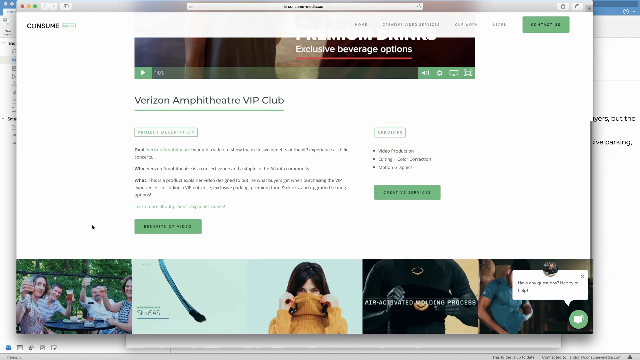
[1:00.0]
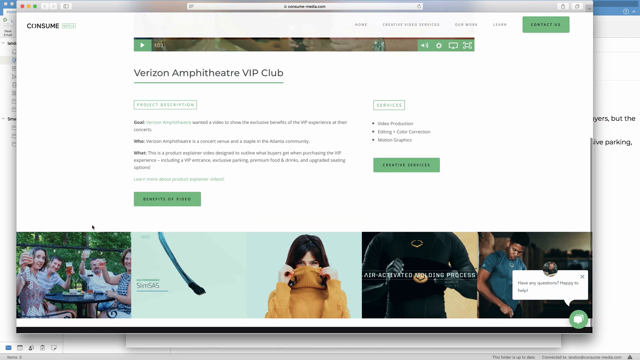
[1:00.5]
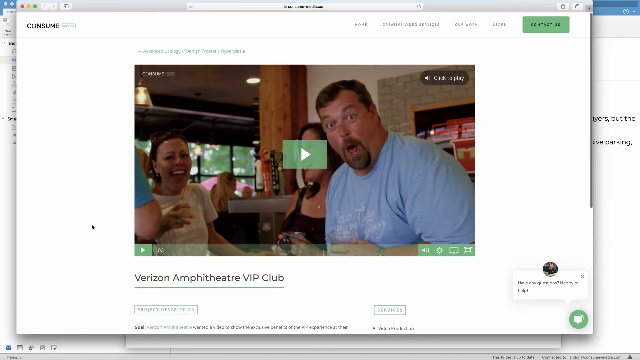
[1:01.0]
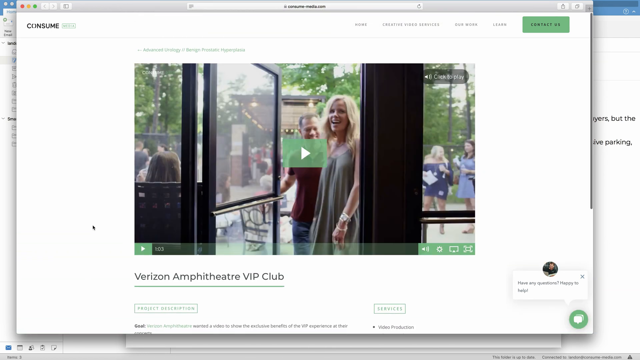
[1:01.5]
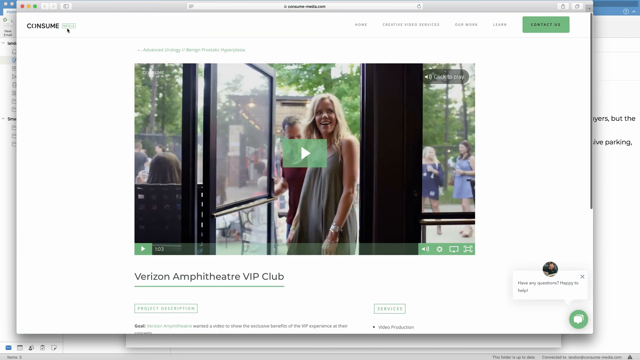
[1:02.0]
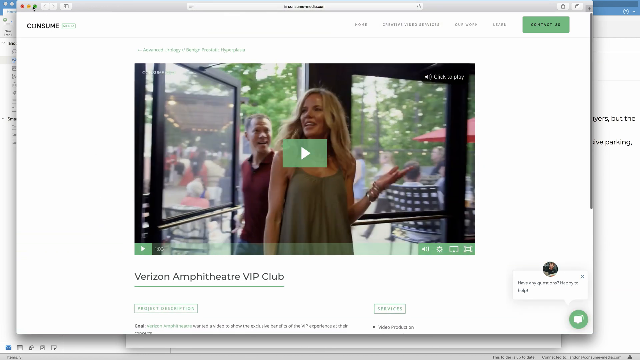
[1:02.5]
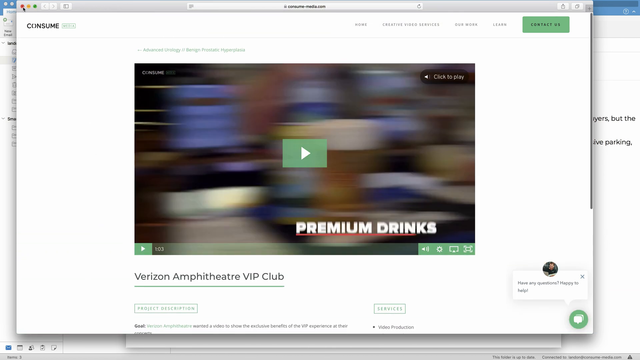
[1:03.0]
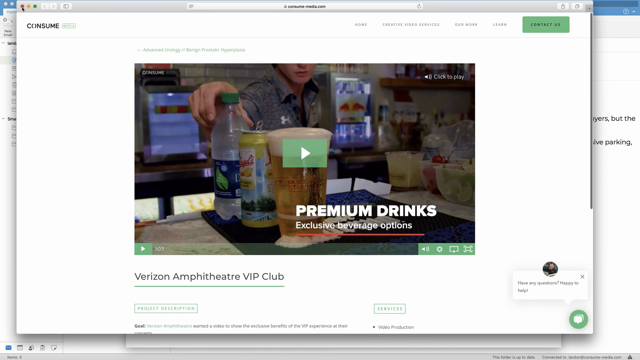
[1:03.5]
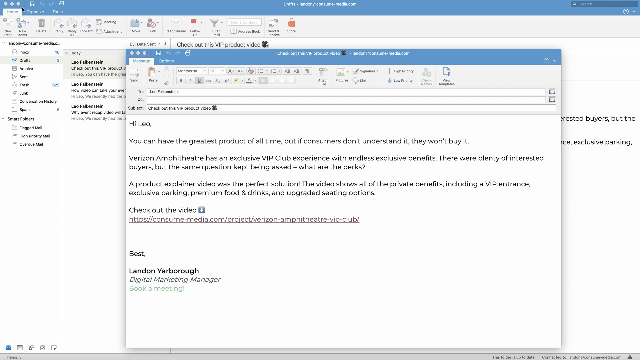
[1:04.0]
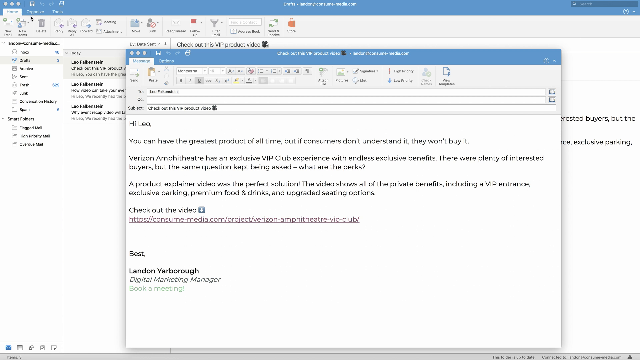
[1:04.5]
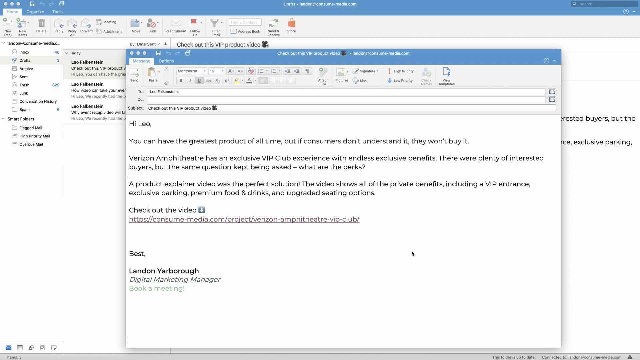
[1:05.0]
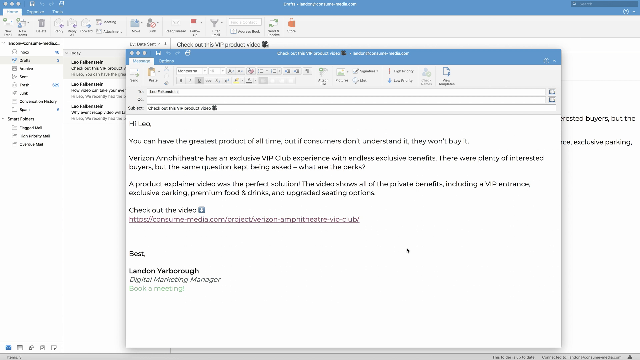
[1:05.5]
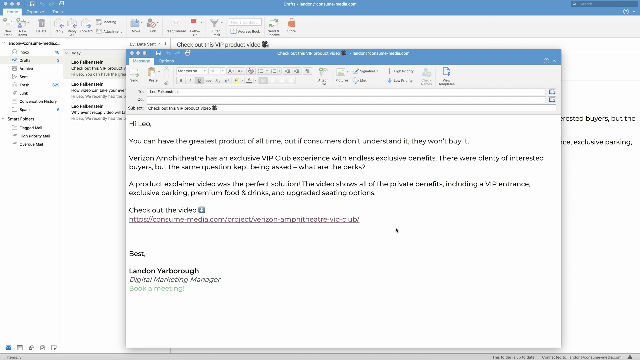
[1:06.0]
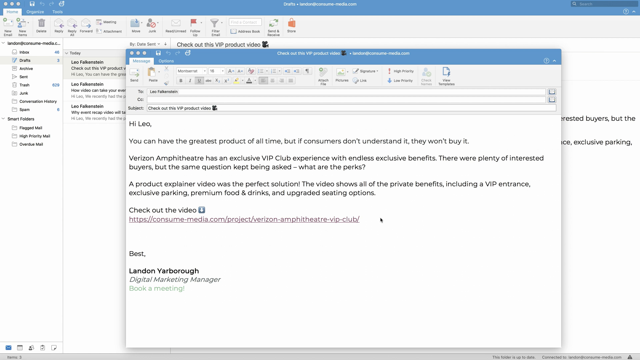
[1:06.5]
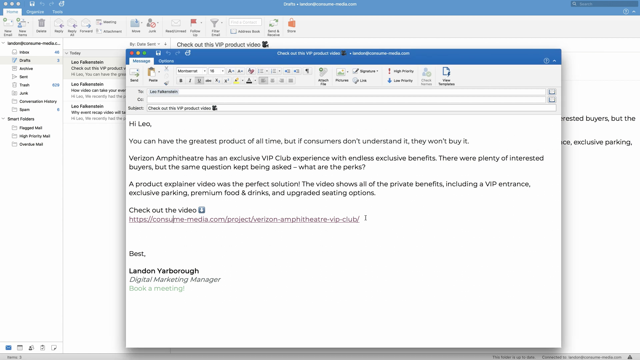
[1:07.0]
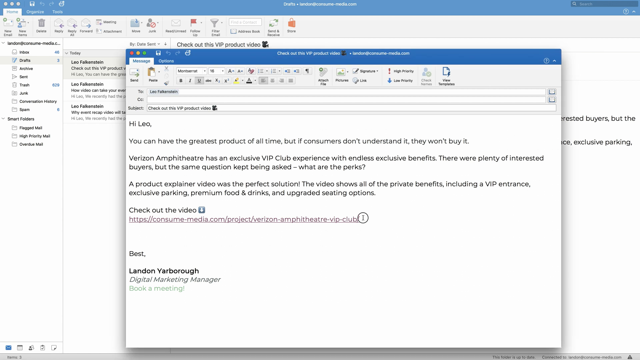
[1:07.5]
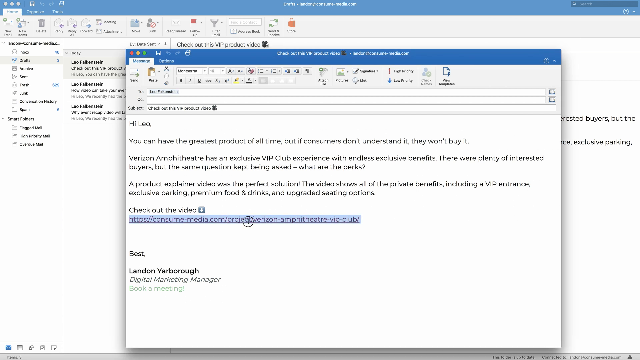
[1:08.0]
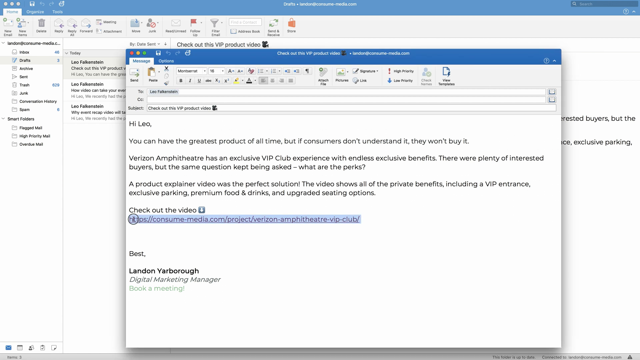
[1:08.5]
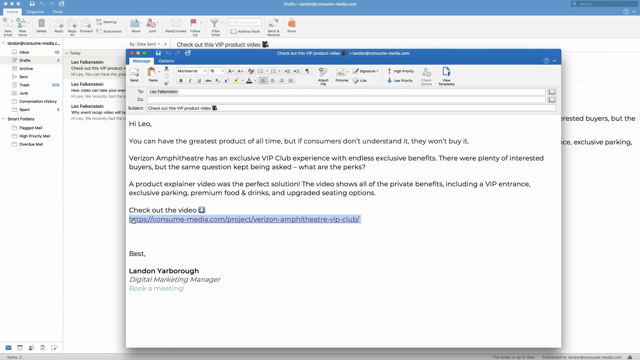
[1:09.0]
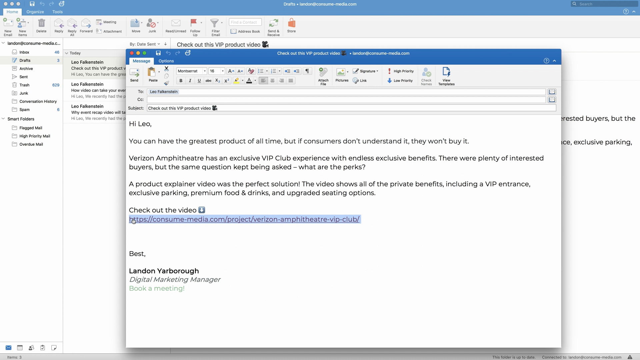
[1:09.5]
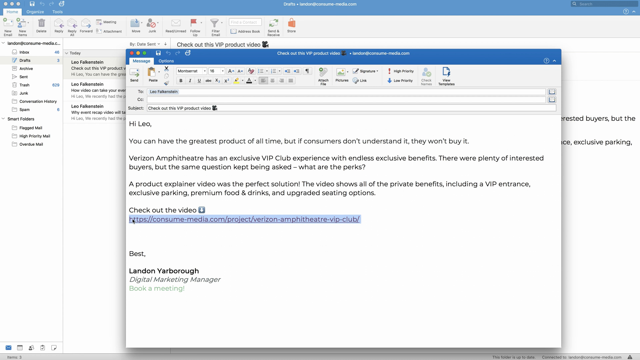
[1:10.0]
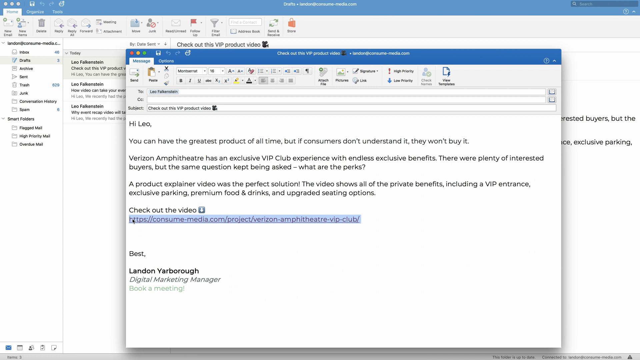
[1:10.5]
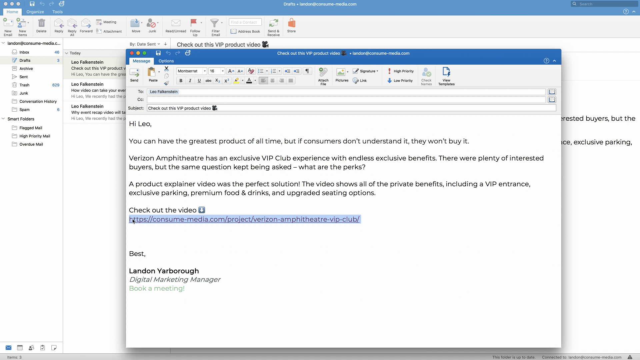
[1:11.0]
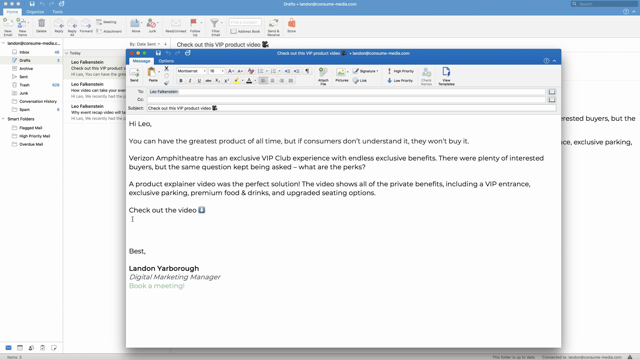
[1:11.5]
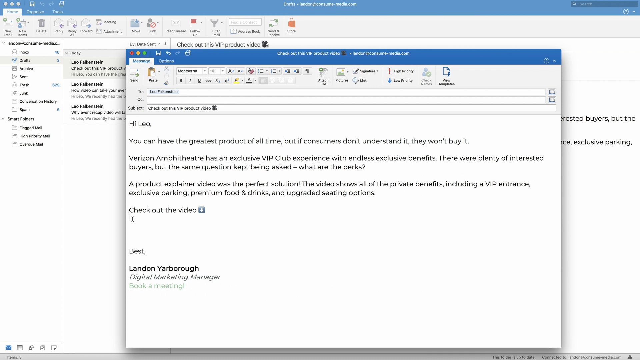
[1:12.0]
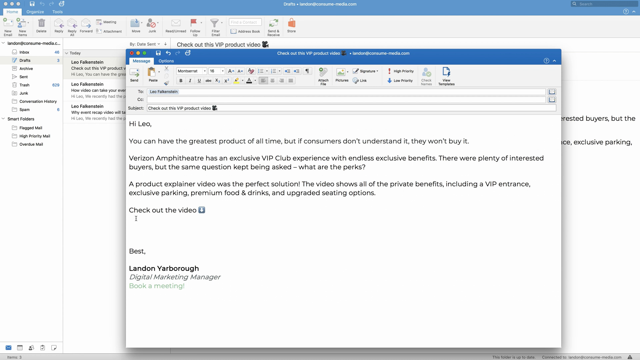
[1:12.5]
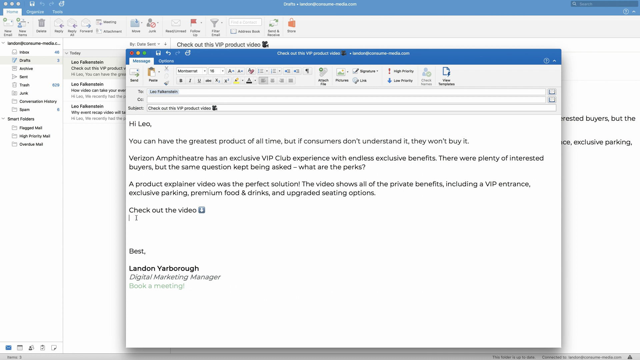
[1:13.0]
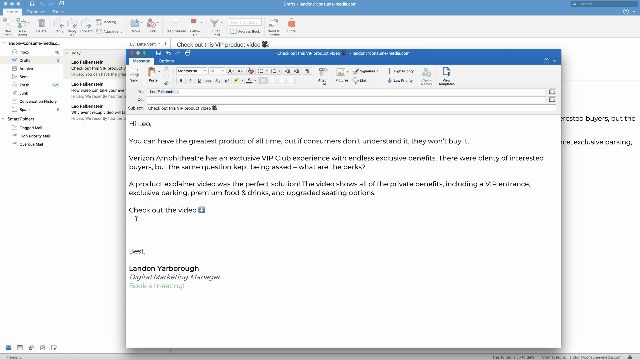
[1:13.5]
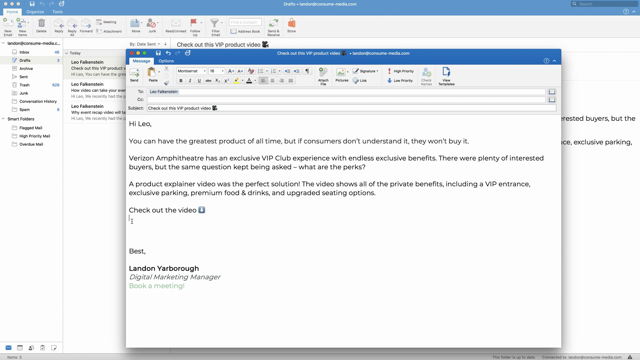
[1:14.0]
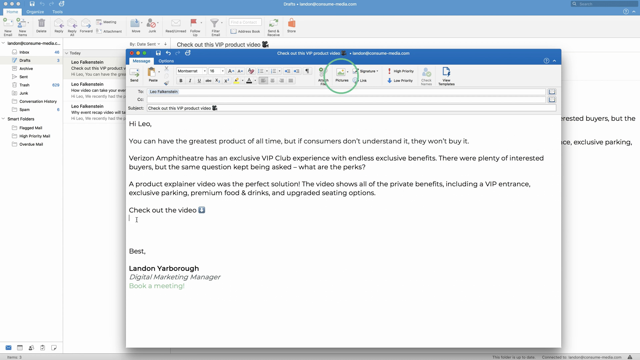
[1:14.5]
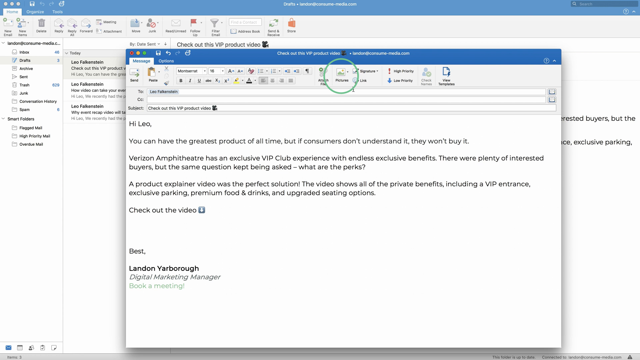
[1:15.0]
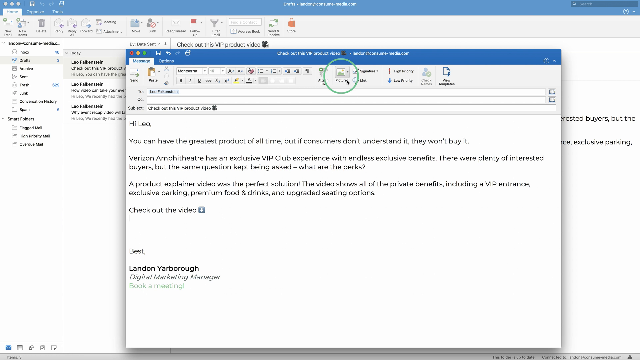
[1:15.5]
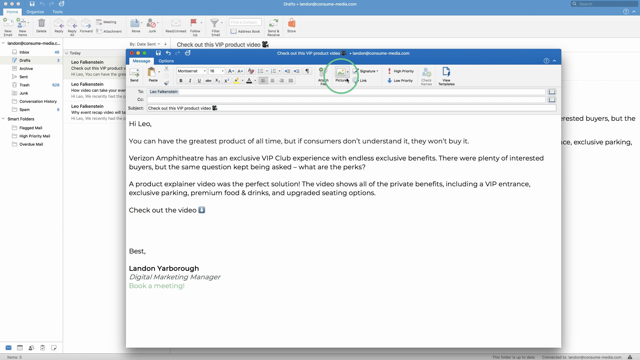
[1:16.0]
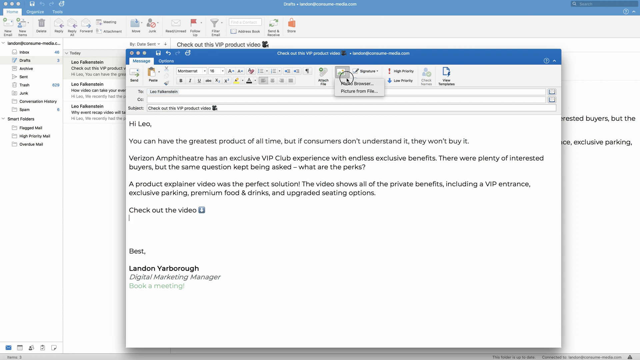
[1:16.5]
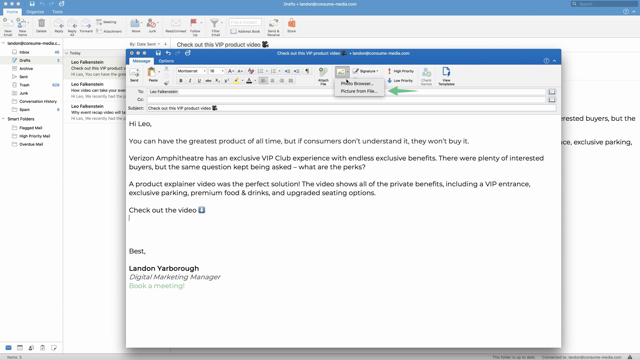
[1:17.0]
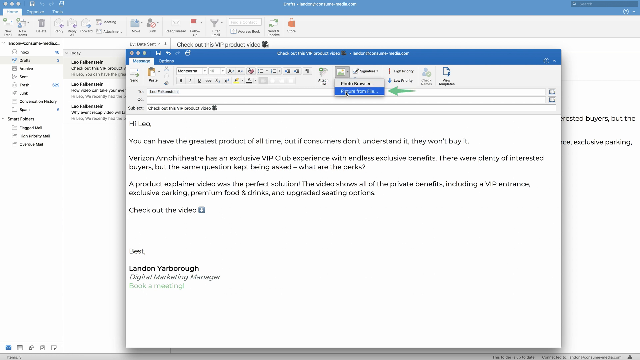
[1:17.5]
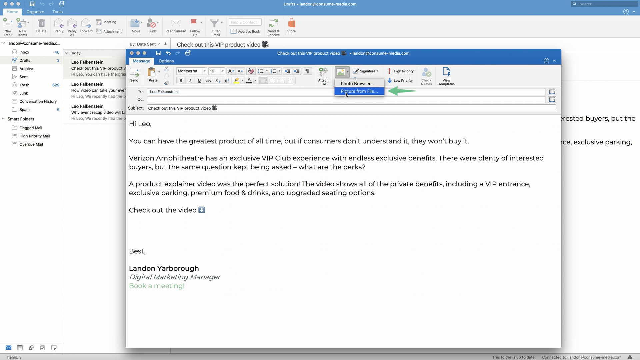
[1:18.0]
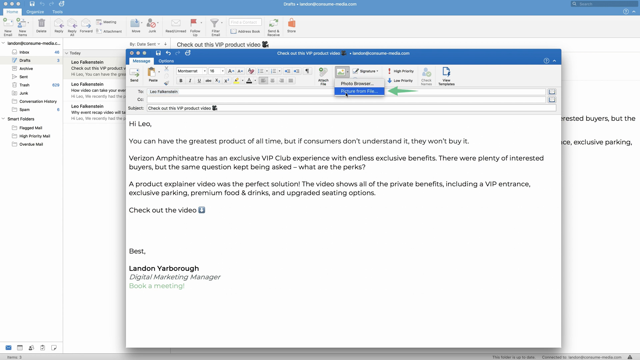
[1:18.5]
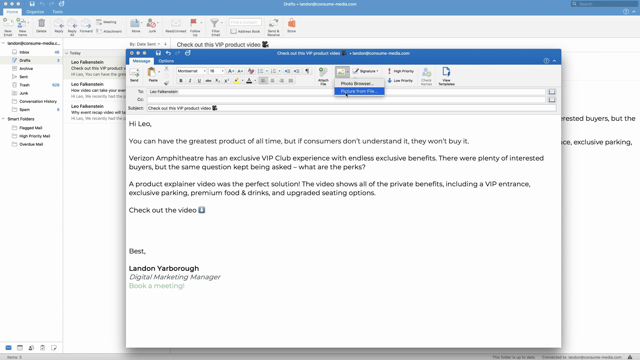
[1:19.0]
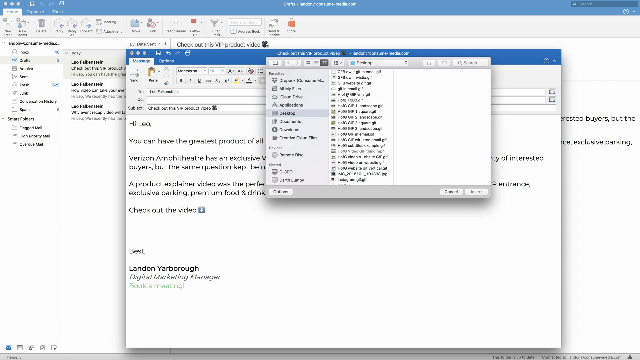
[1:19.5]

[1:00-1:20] The video from the link attached to the email shows the premium drinks of the Verizon Amphitheater VIP Club, its exclusive beverage options, with a group of men and women drinking water and beer in a bar setting. Leo highlights the link, copies it, and saves it on his laptop. Services are listed: video productions, editing, and graphics.